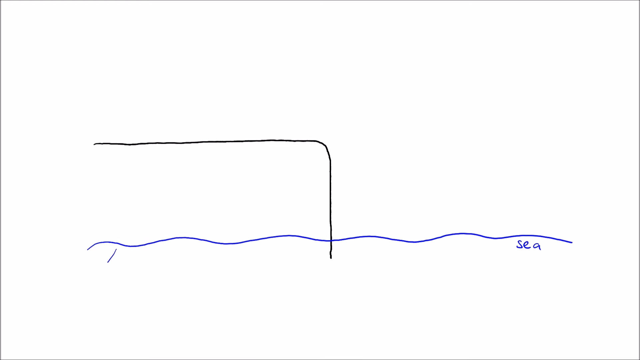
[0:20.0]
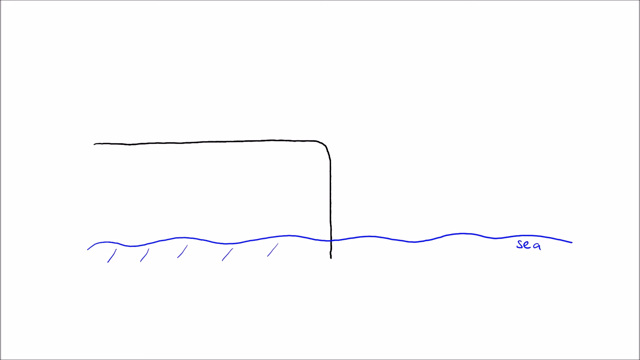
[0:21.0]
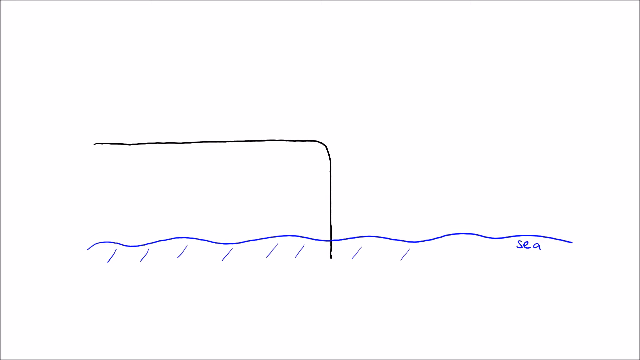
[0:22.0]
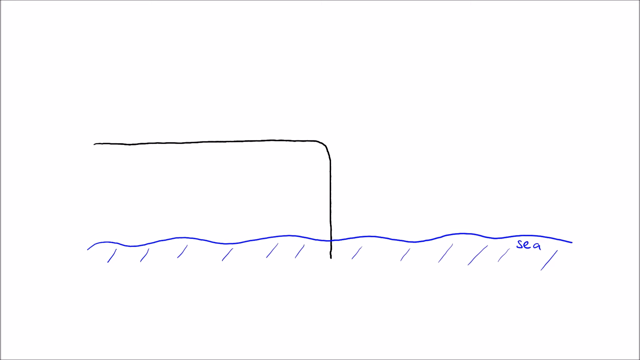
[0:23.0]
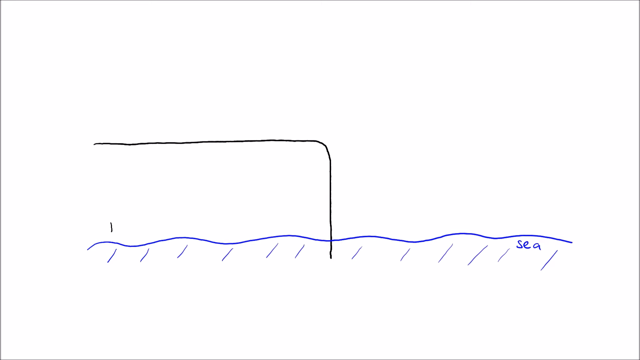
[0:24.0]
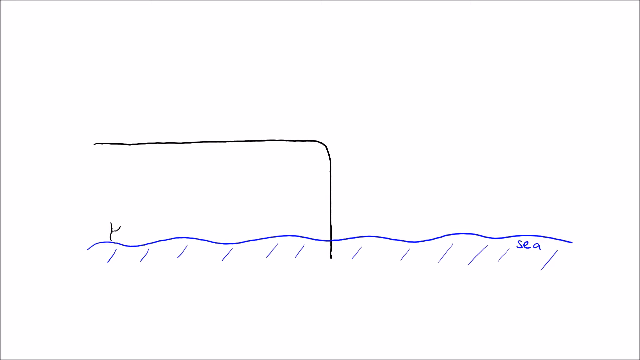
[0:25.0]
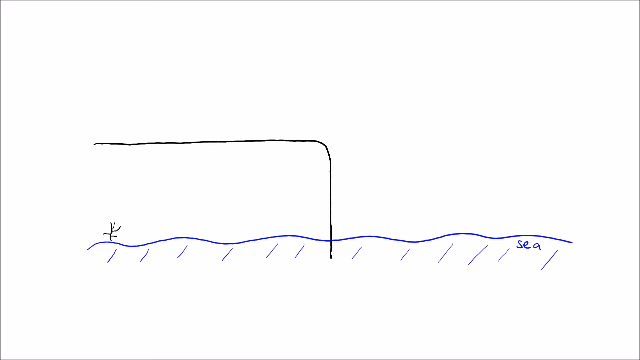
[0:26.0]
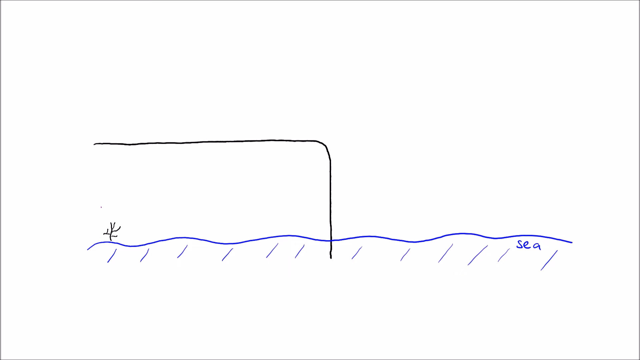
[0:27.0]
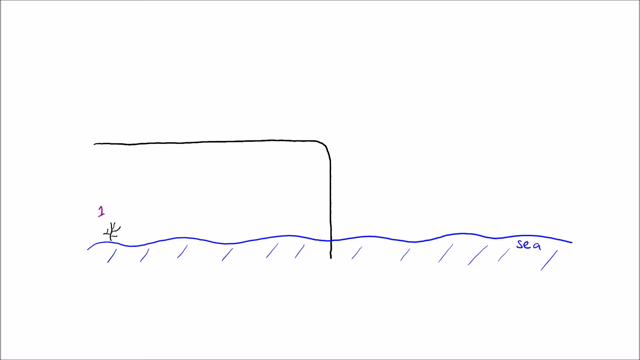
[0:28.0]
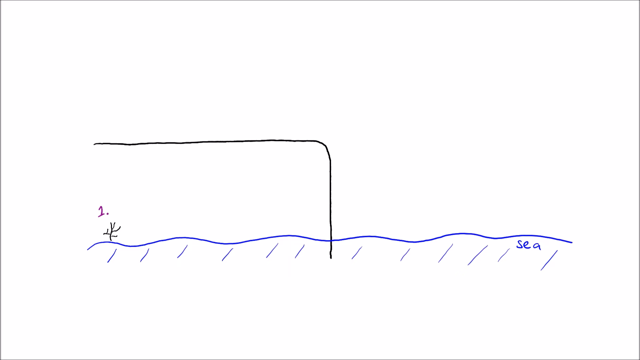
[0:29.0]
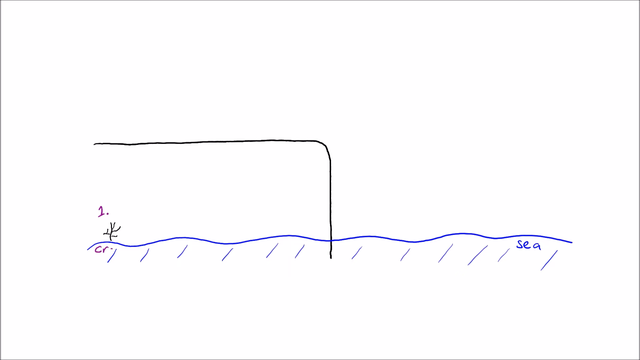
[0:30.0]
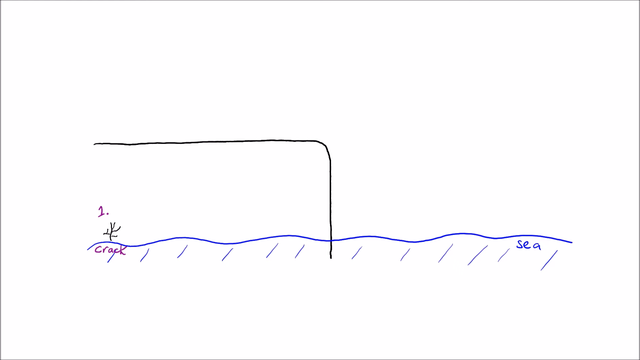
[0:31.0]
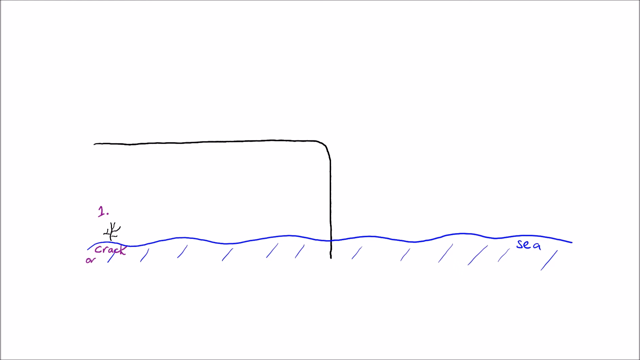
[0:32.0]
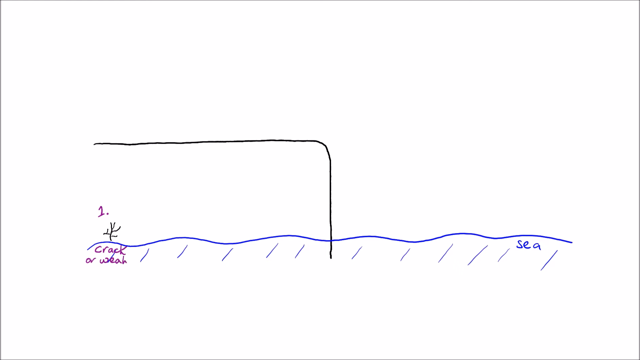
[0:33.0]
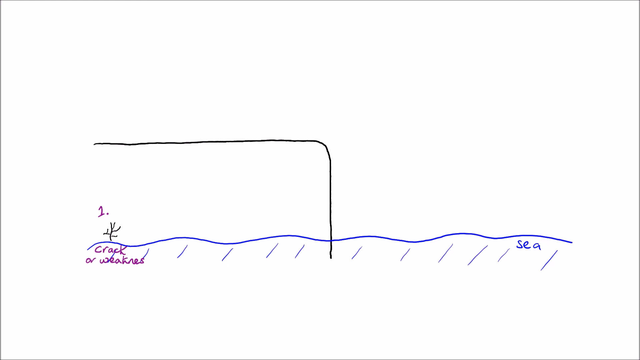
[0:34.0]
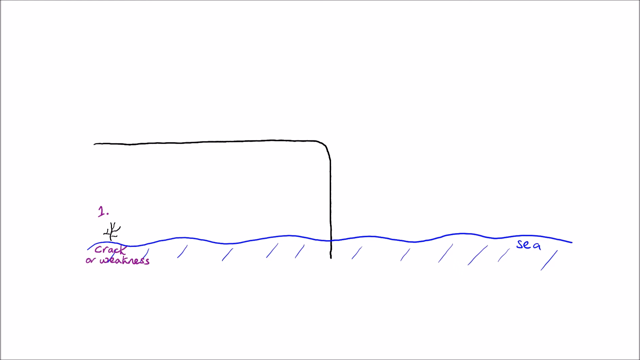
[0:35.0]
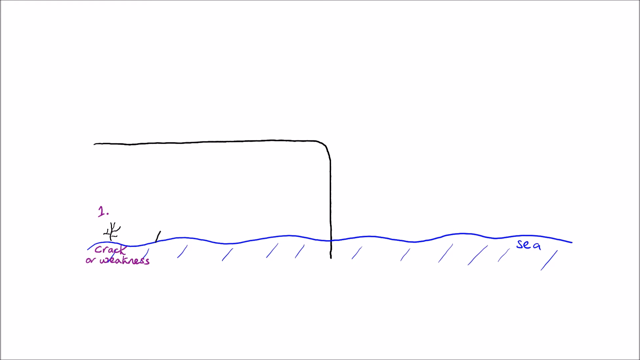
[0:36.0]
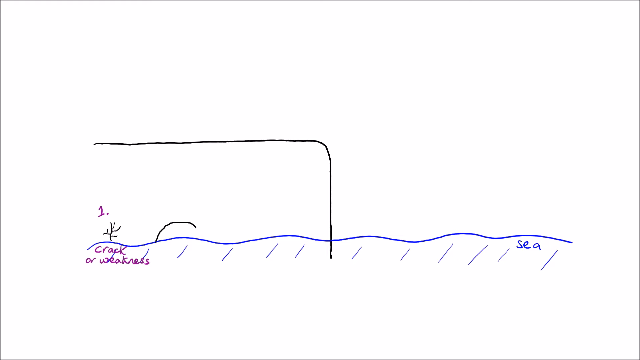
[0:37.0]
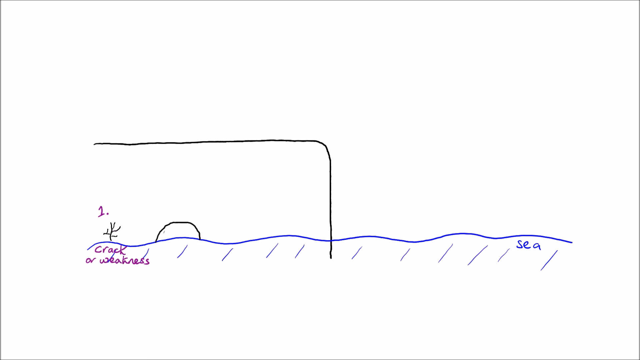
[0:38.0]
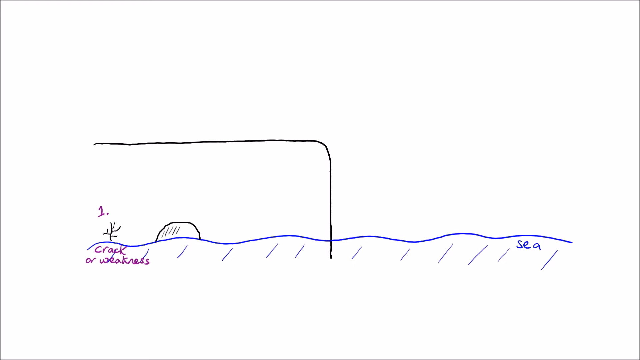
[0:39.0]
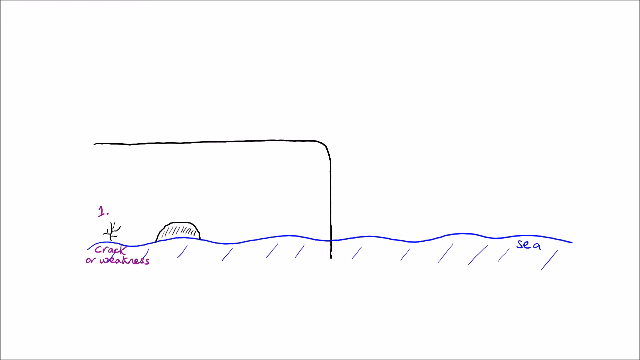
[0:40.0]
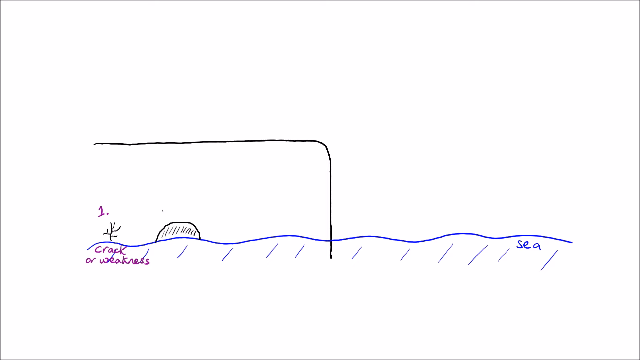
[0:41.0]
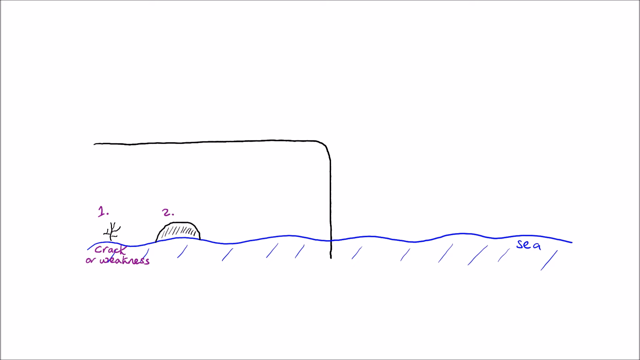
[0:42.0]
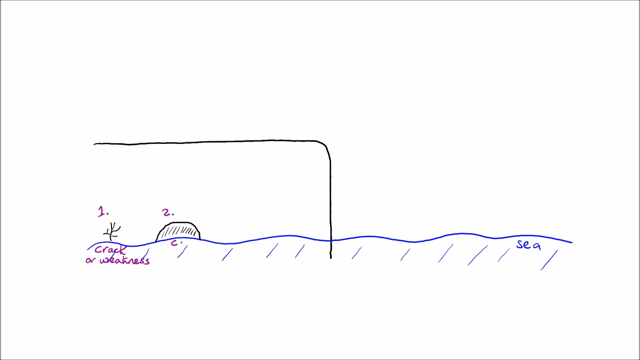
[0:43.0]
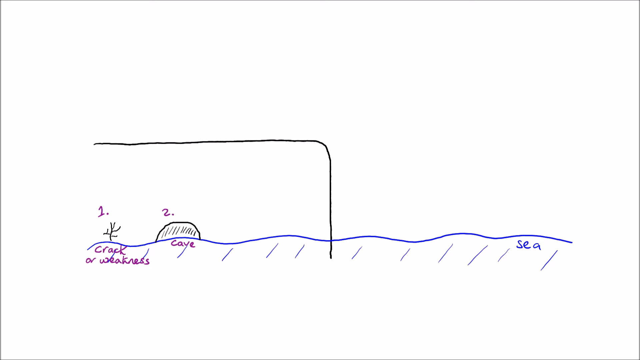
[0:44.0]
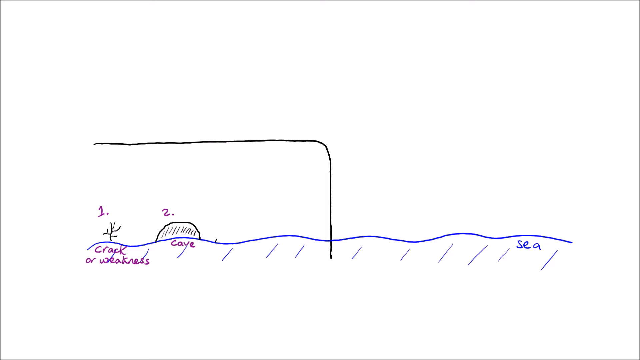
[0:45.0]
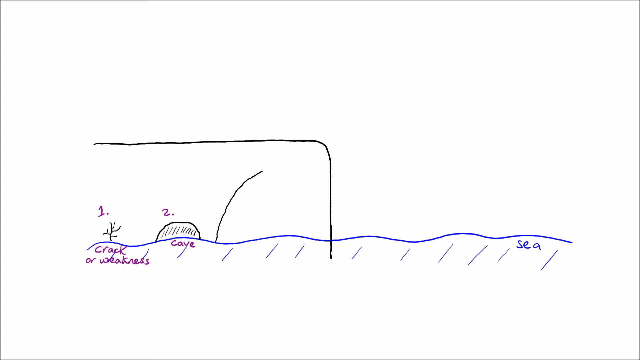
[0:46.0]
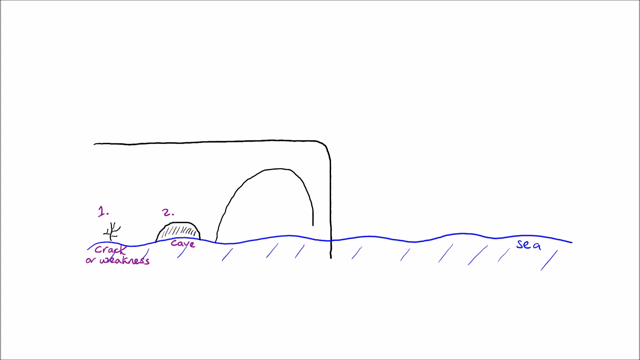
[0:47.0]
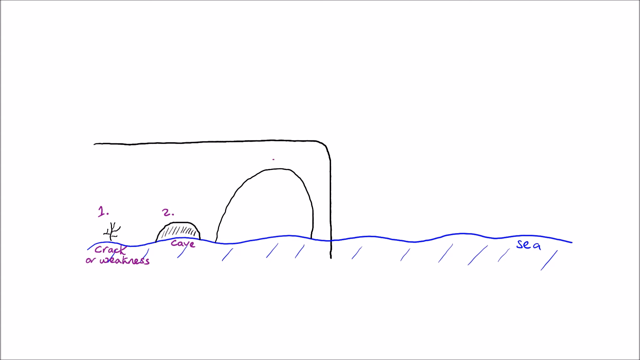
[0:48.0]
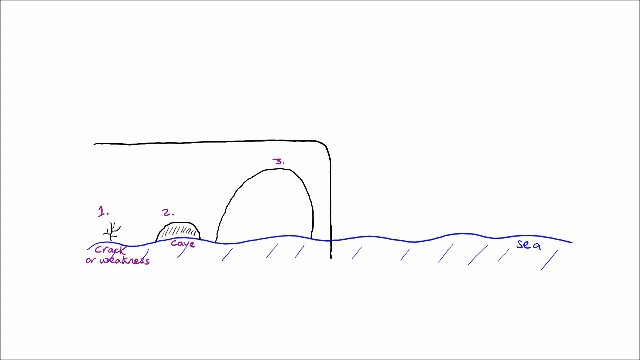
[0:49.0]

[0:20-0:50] The same mountain-like structure drawn in black comes in from the left side and cuts down to the bottom. Blue wavy lines below it indicate water and are labelled "sea". Numbered labels are written on the drawing: number one is a crack drawn on the mountain-like structure, labelled "a crack or weakness"; number two is a cave in the structure, labelled "cave"; and number three is another drawing, probably an arc. Some of the writing is in purple.